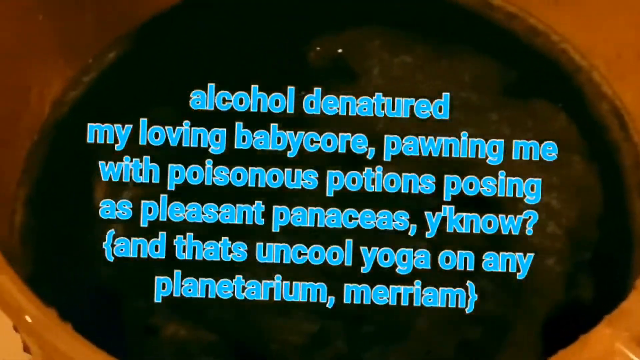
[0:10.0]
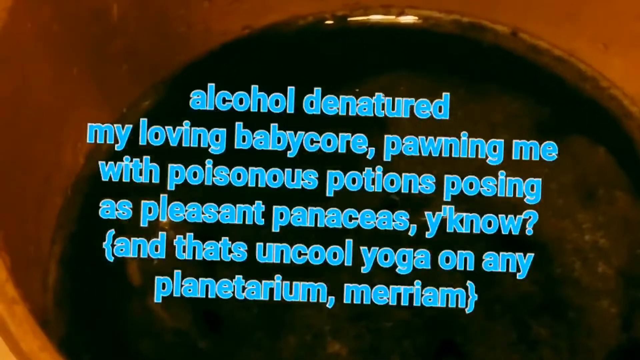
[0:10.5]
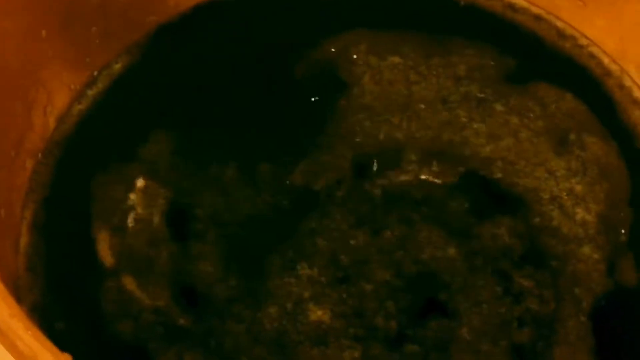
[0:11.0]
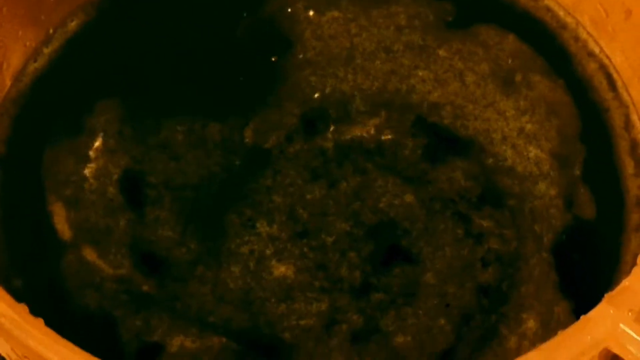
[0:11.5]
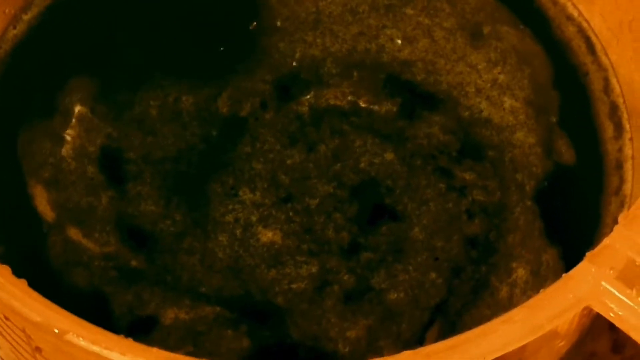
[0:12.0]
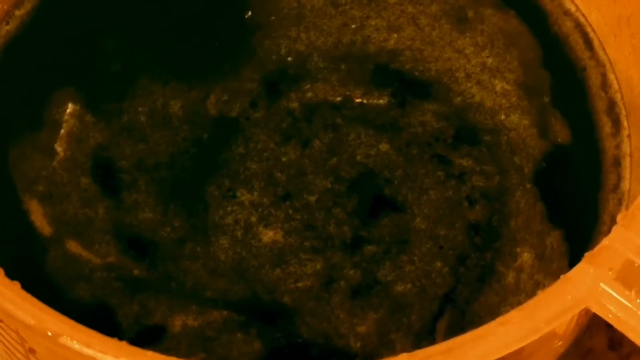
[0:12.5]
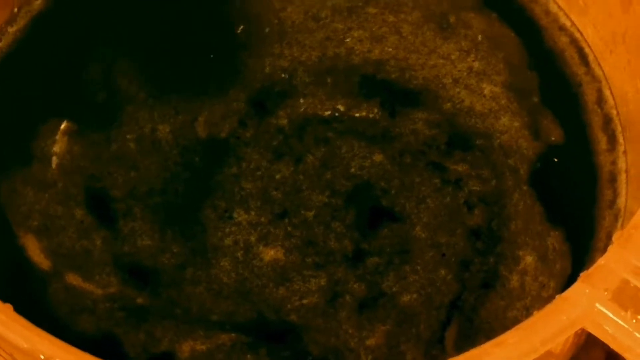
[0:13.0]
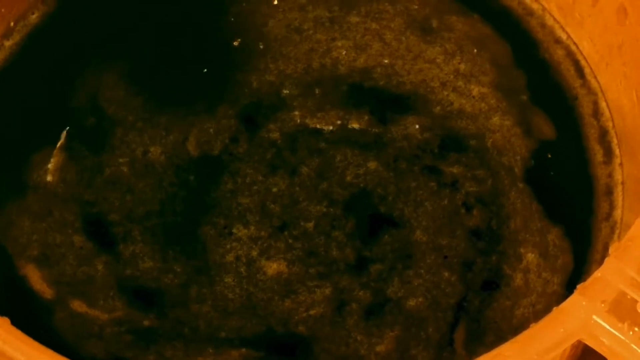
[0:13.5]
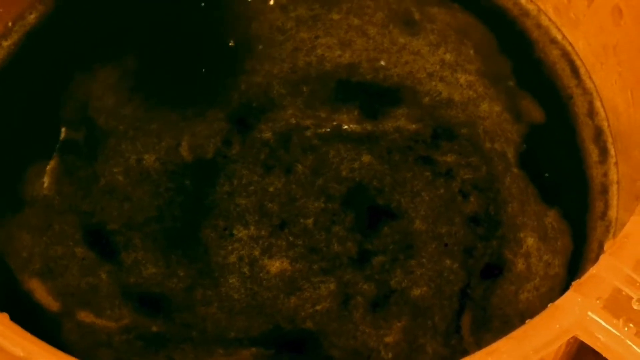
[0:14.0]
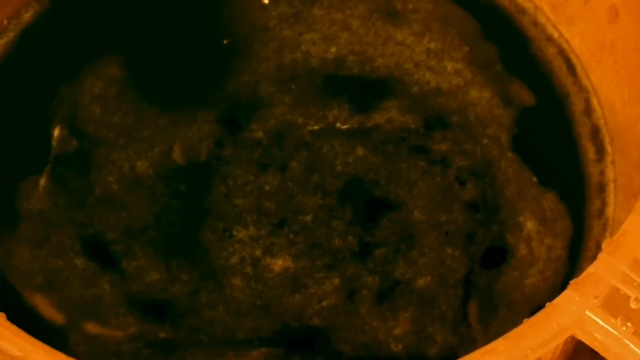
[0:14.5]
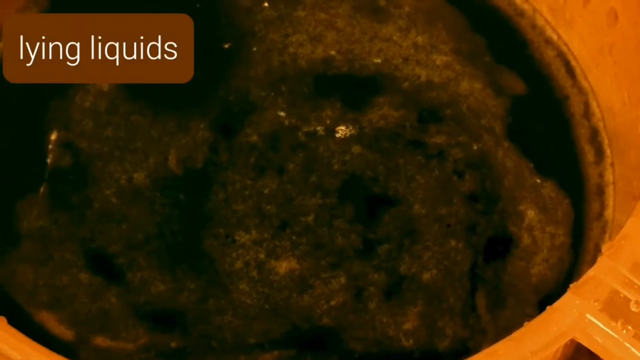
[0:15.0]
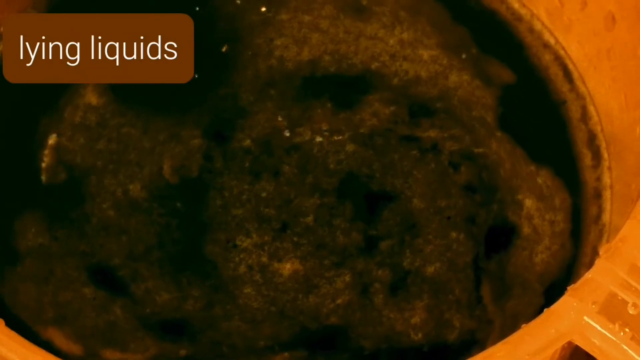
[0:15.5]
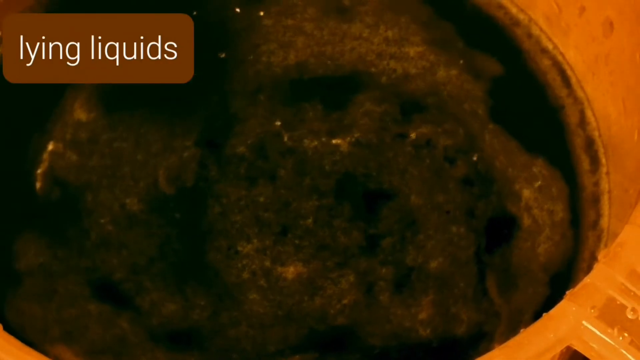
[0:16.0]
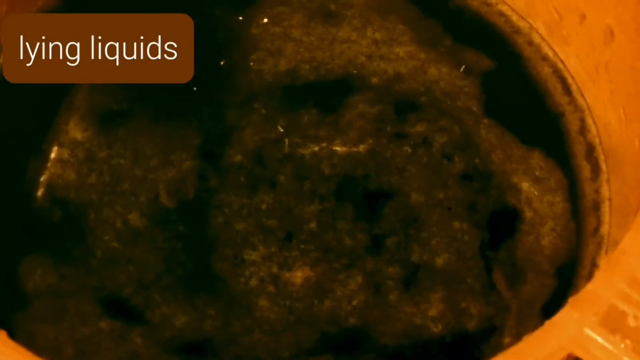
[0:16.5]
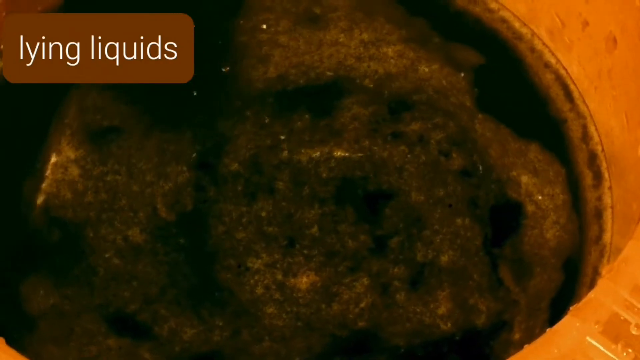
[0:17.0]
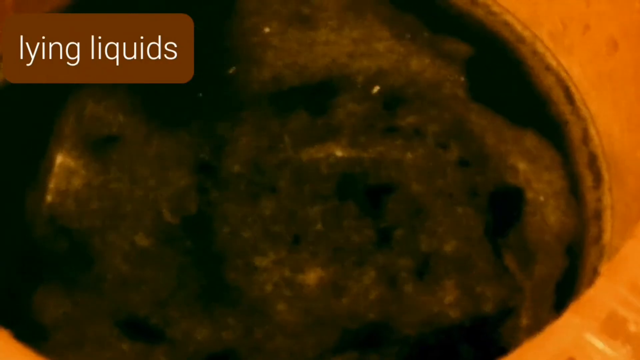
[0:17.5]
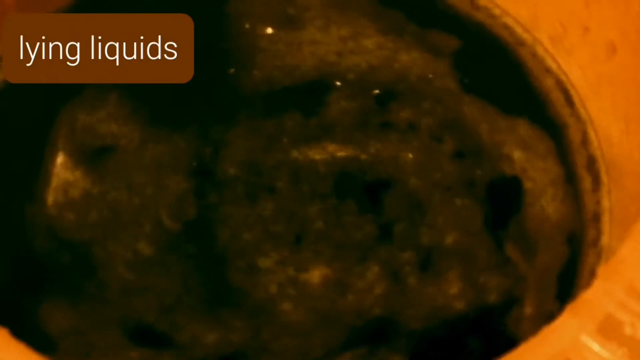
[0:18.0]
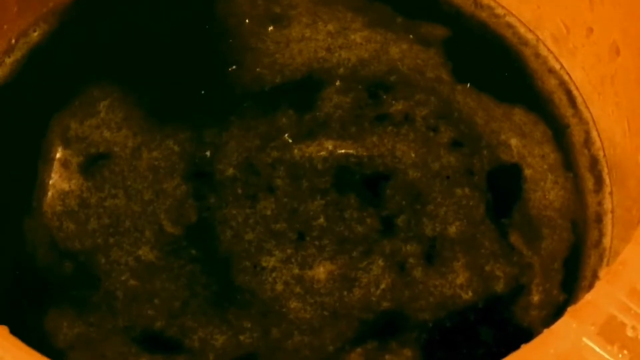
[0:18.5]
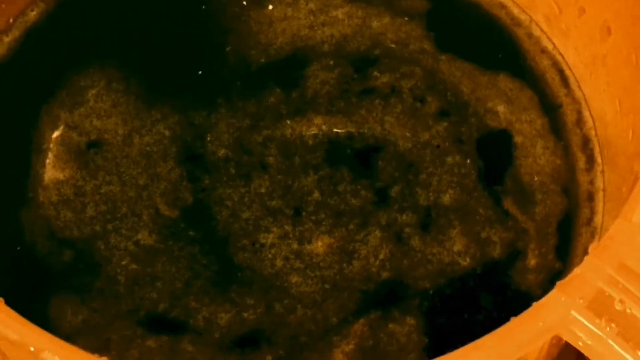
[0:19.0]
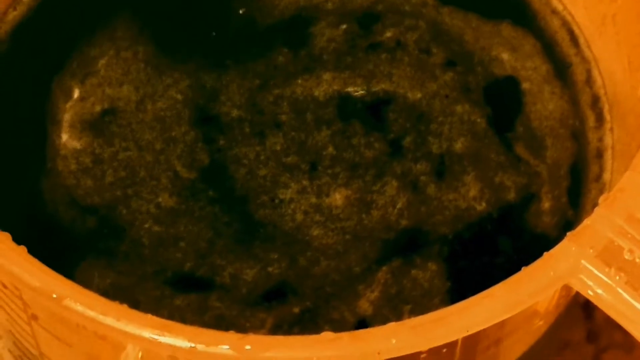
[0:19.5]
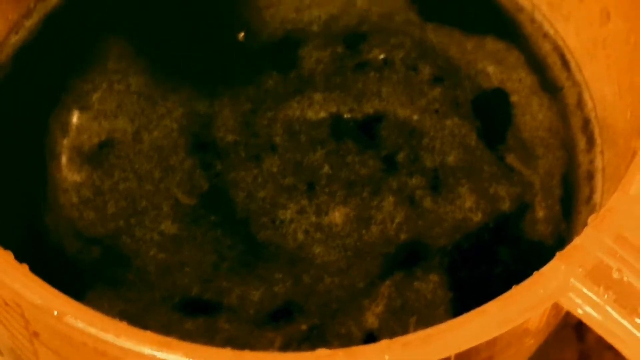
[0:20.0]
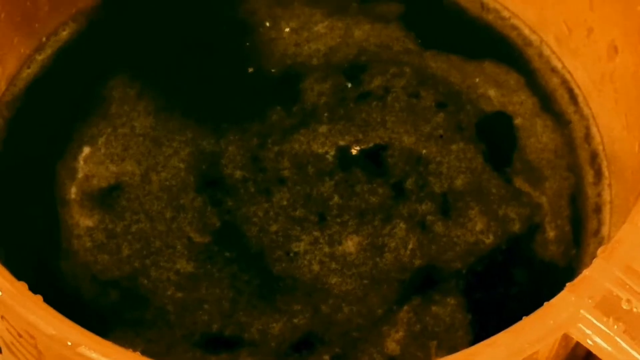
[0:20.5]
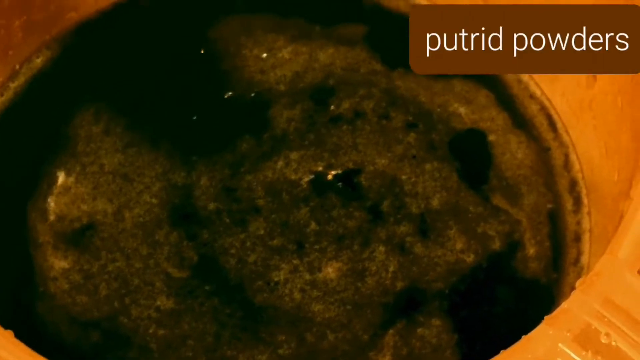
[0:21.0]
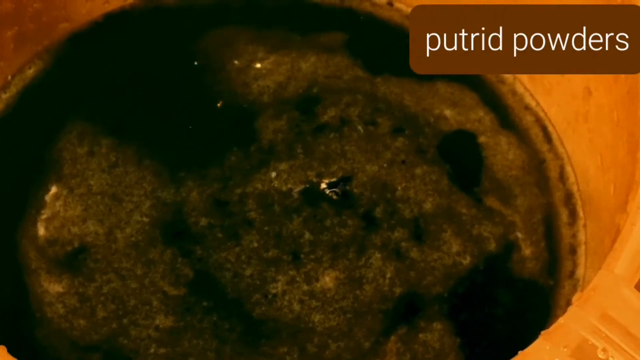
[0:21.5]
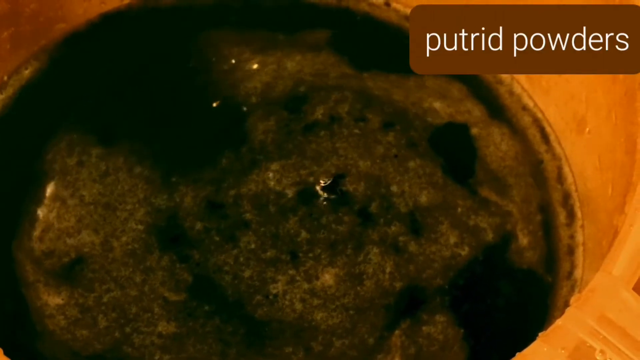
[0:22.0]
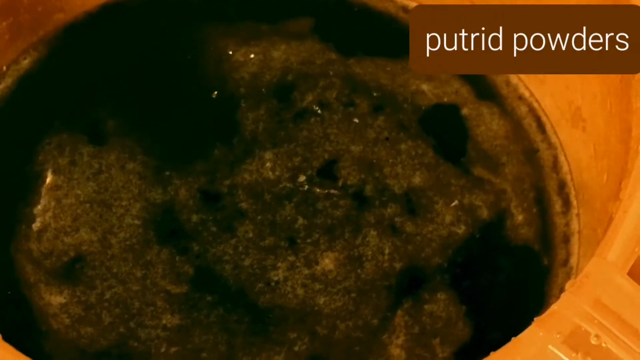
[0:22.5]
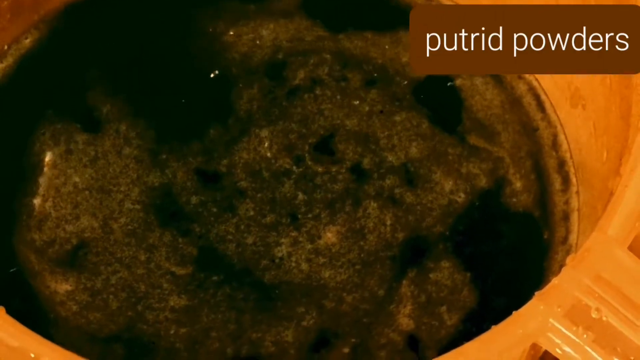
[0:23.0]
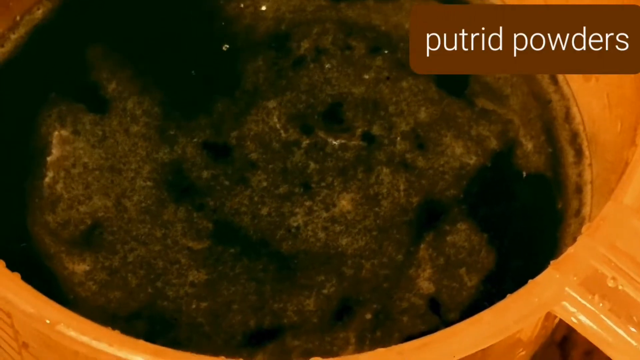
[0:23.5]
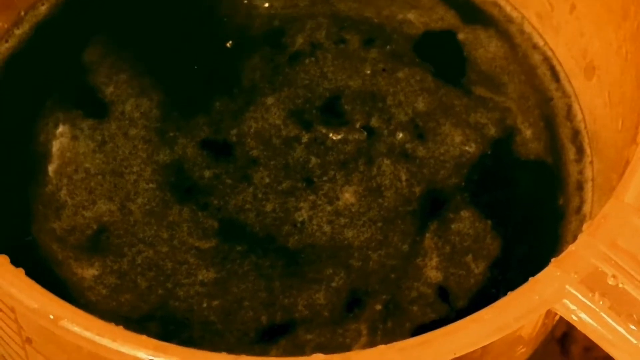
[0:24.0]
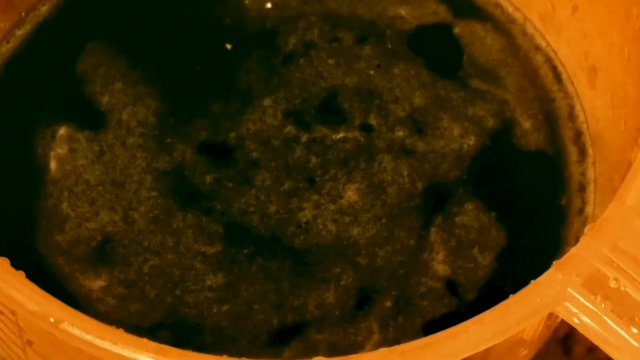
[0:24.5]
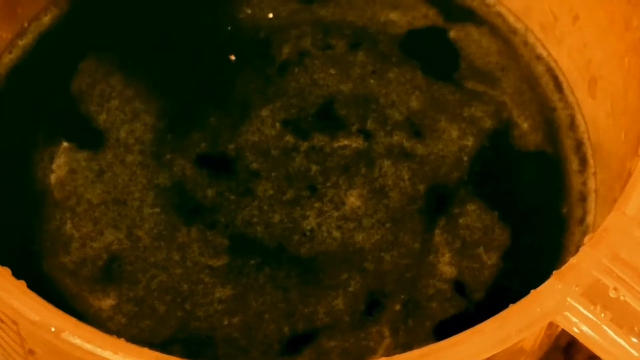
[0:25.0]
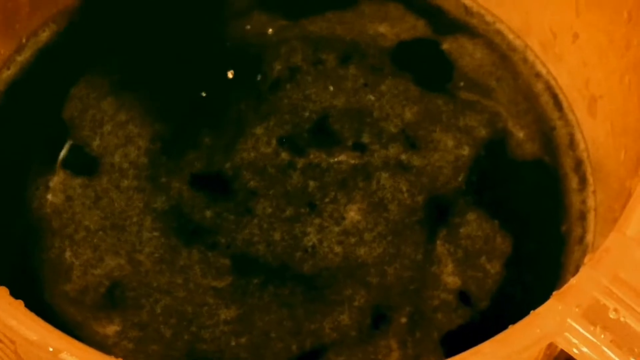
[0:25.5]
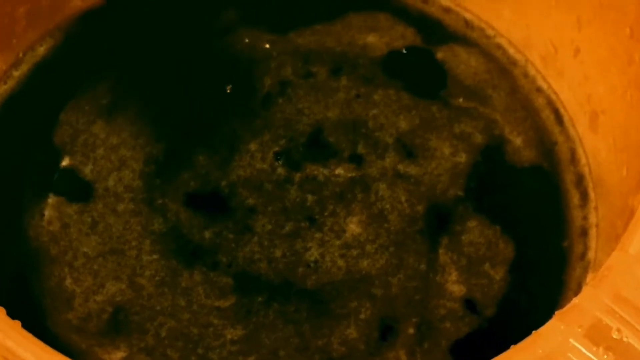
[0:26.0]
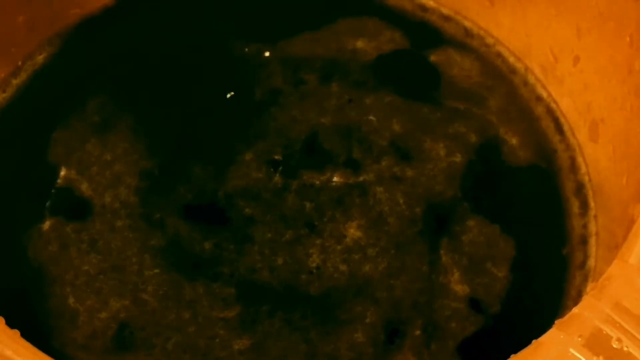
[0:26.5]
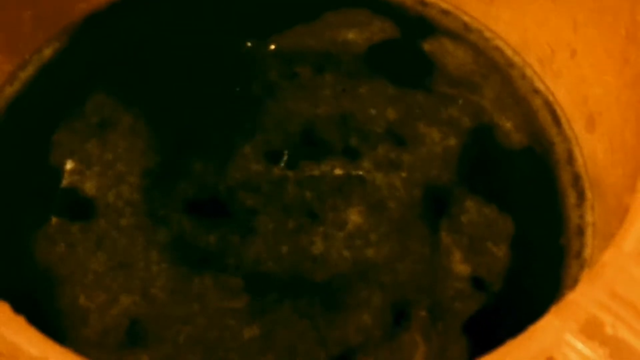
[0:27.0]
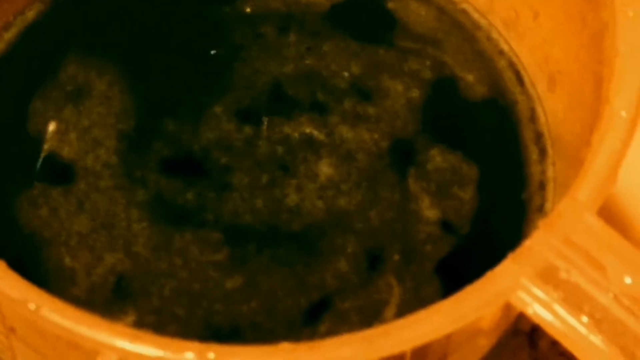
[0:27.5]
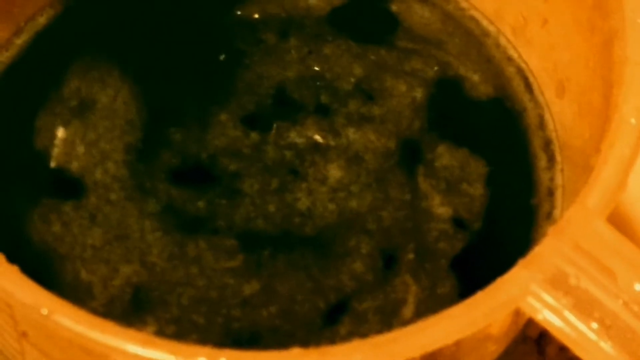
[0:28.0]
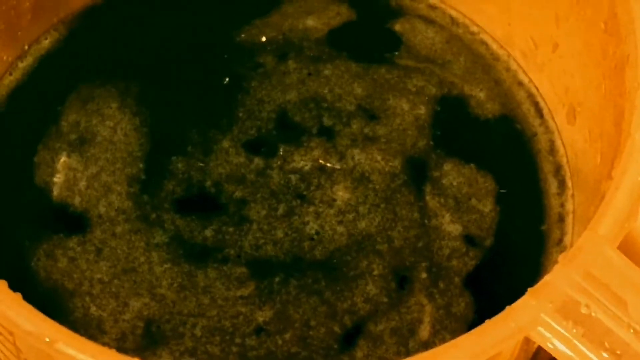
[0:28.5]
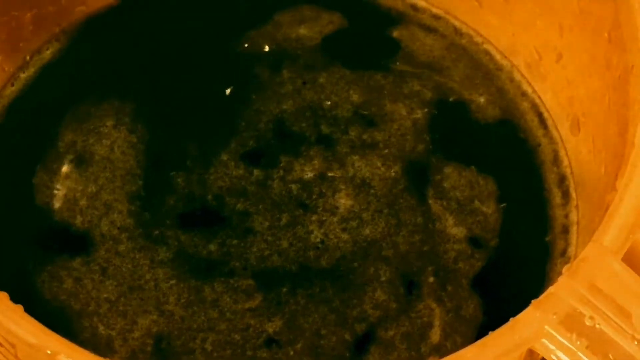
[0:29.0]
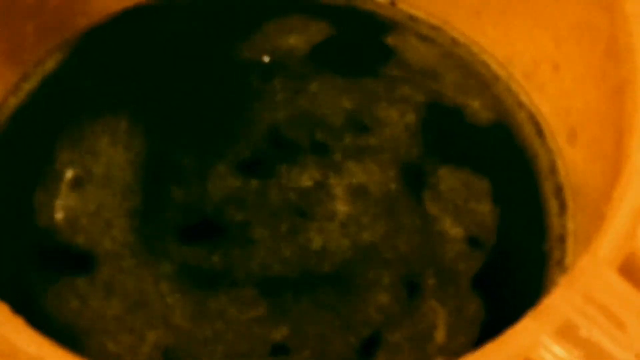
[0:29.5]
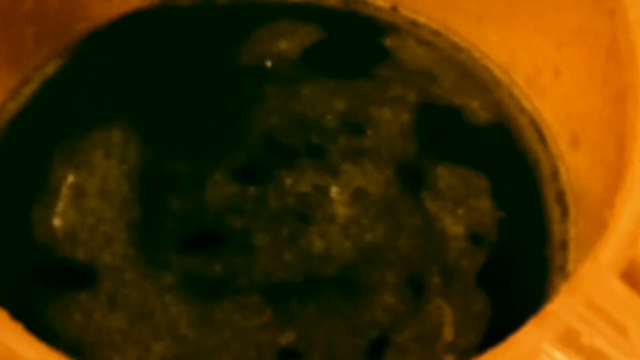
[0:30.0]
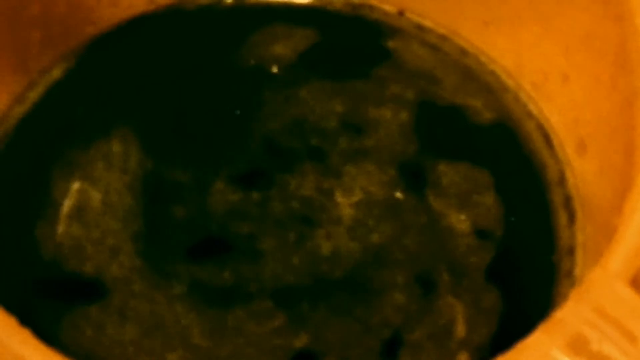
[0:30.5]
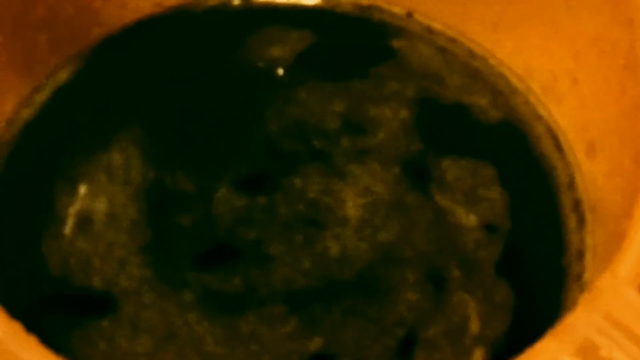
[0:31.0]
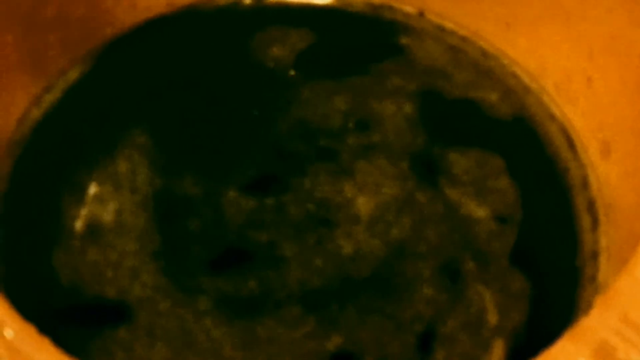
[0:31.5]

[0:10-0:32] Blue text appears in the center of the screen reading "alcohol denatured my loving baby core pawning me with poisonous potions posing as pleasant panaceas y'know." The image bounces about, the text disappears, and the view focuses in on the movement within the cup. A powder crust is stuck to the edges of the cup, and the gloopy mass in the middle continues to rotate anti-clockwise; it appears similar to frog spawn, dark green with white flakes inside. The liquid itself is a dark brown, dark green color. The text "lying liquids" appears in the top left corner in a brown box with white text, then disappears and is replaced by "putrid powders" in the top right corner, also in a brown box with white text. The image continues to circle with the camera bouncing about, focuses more clearly on the middle, and then unfocuses.